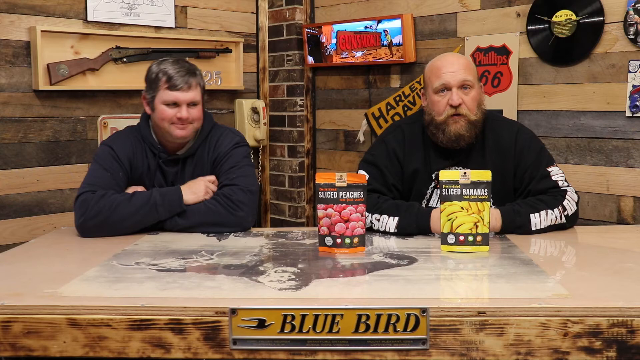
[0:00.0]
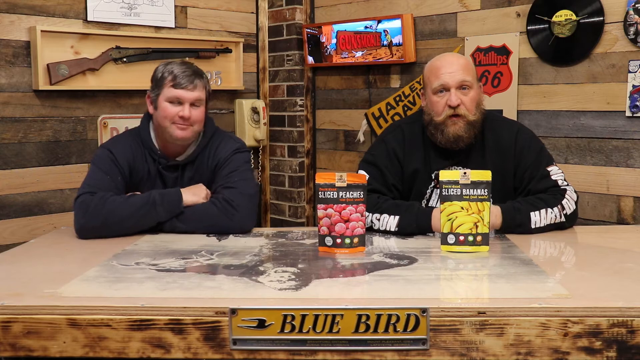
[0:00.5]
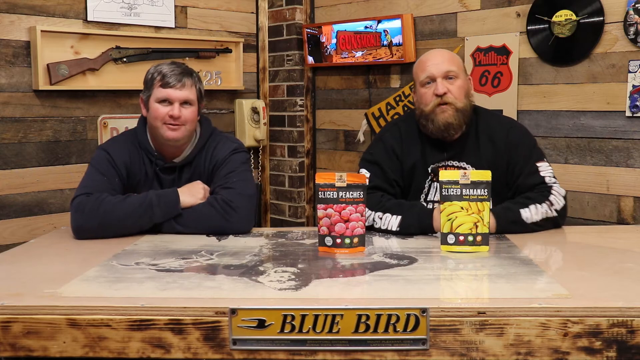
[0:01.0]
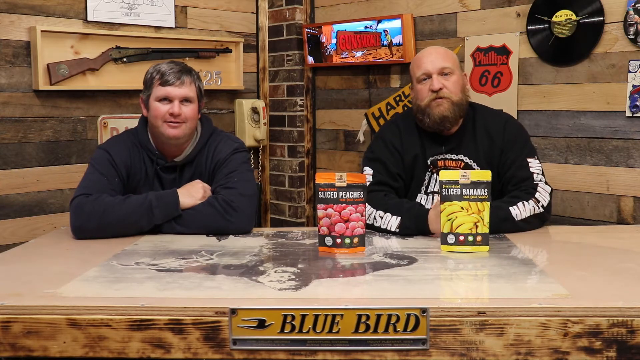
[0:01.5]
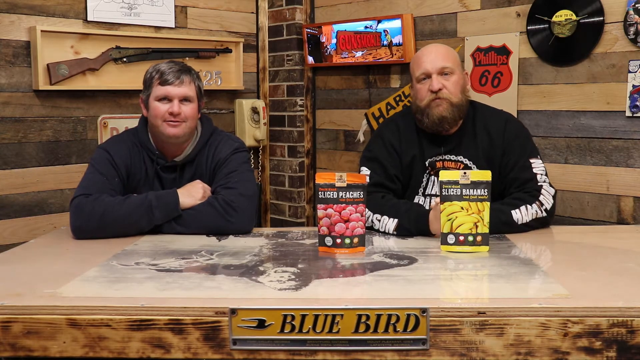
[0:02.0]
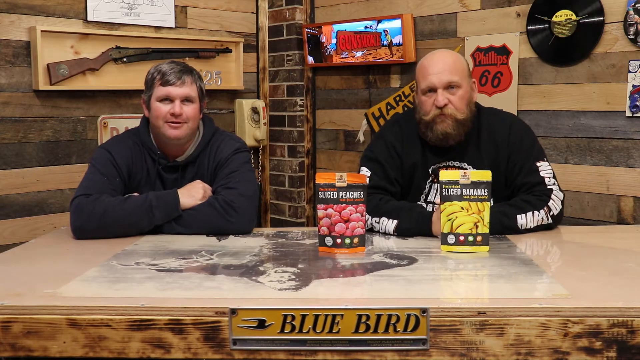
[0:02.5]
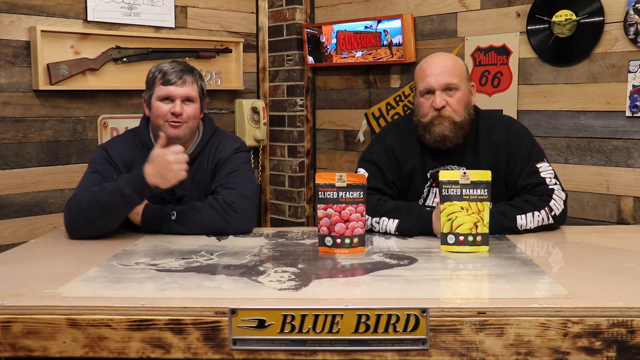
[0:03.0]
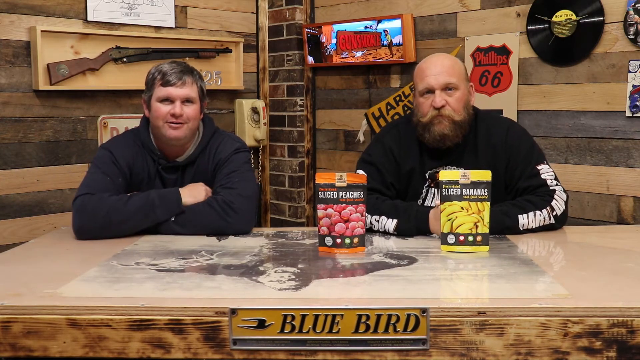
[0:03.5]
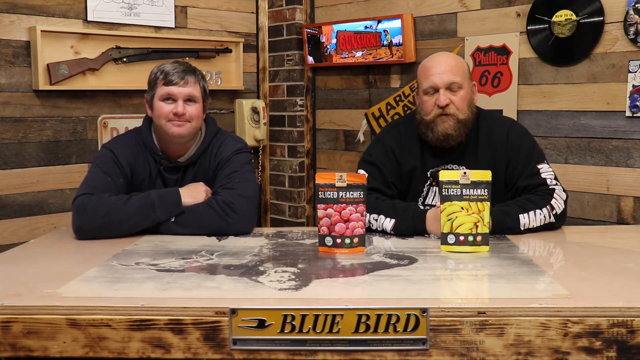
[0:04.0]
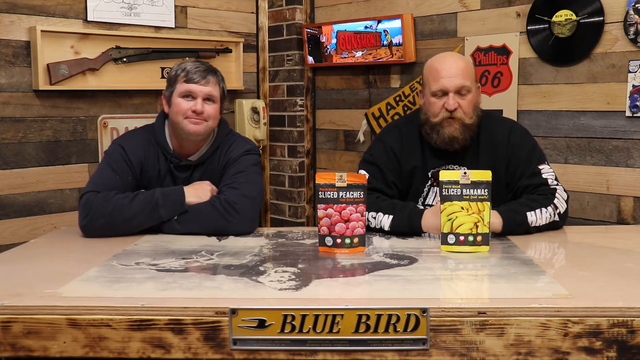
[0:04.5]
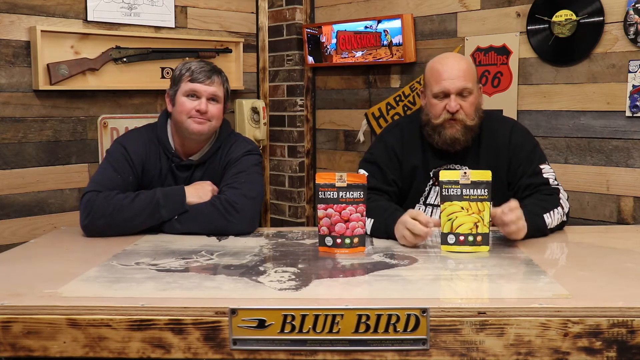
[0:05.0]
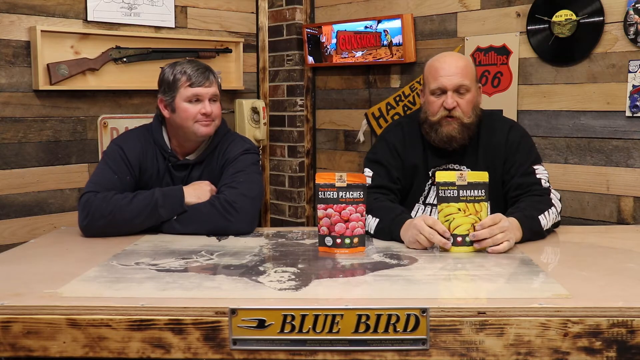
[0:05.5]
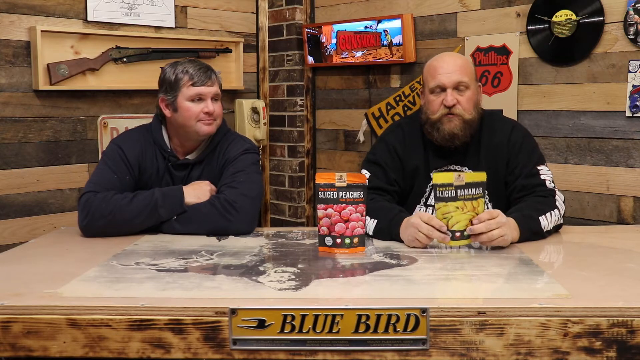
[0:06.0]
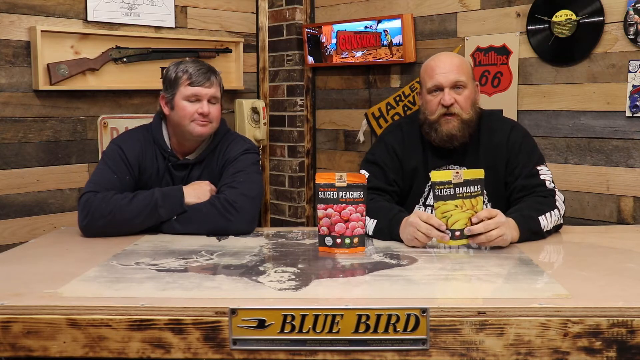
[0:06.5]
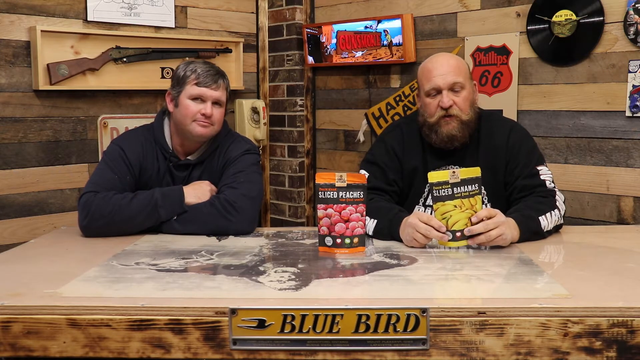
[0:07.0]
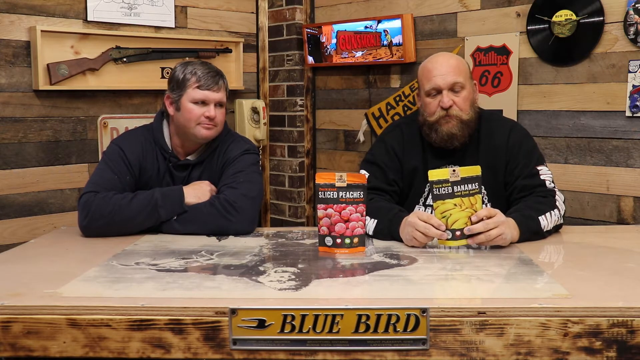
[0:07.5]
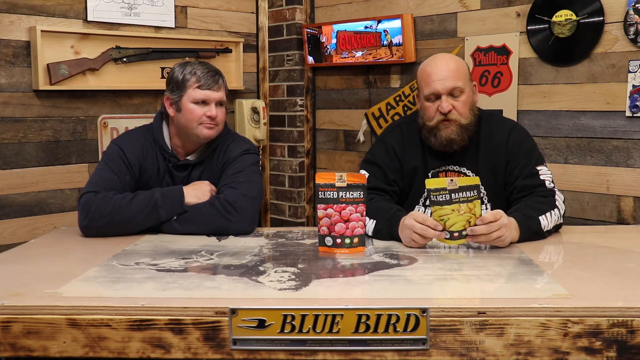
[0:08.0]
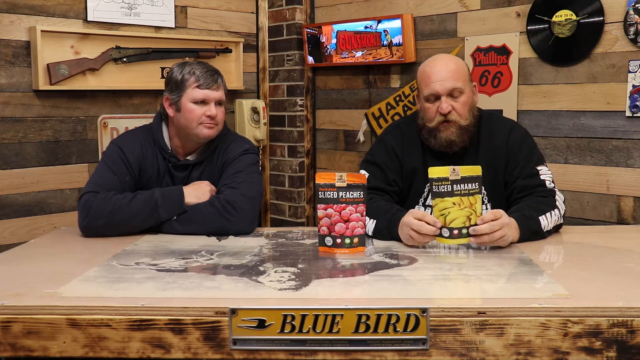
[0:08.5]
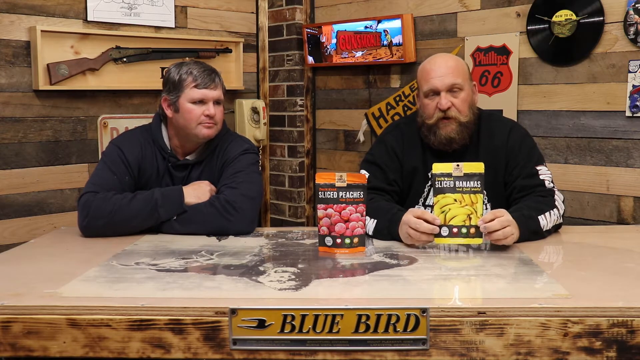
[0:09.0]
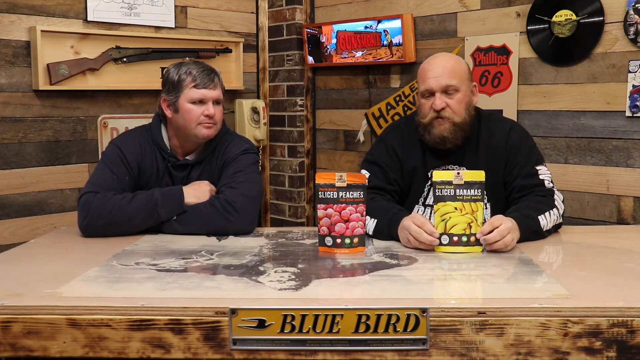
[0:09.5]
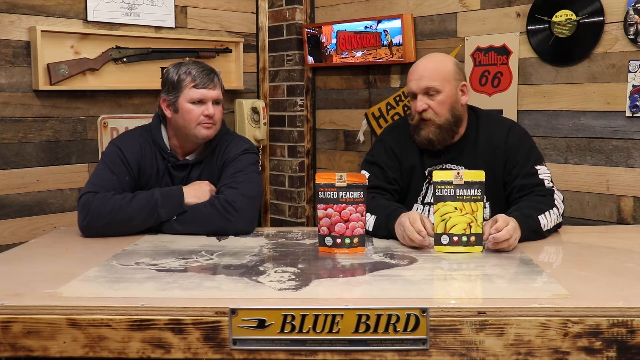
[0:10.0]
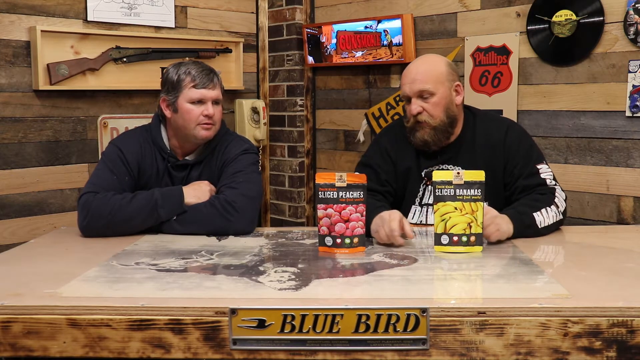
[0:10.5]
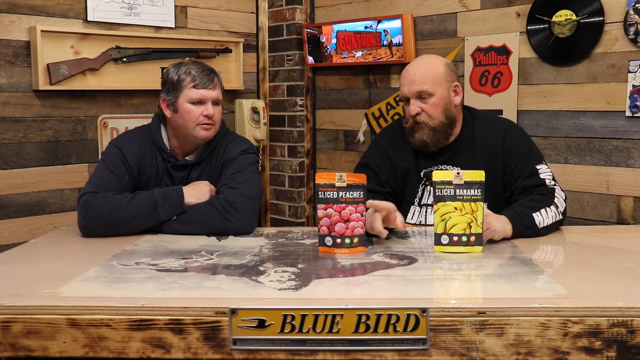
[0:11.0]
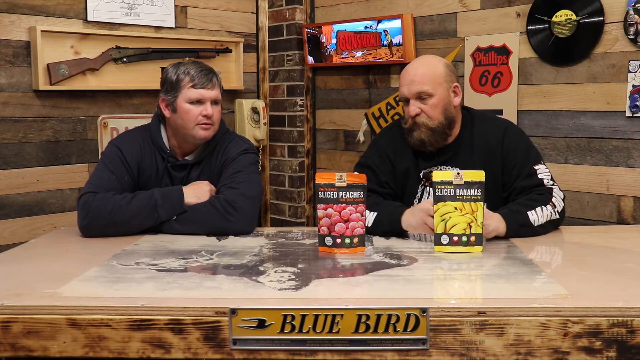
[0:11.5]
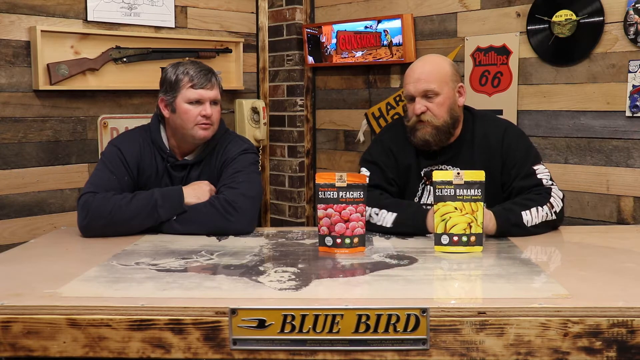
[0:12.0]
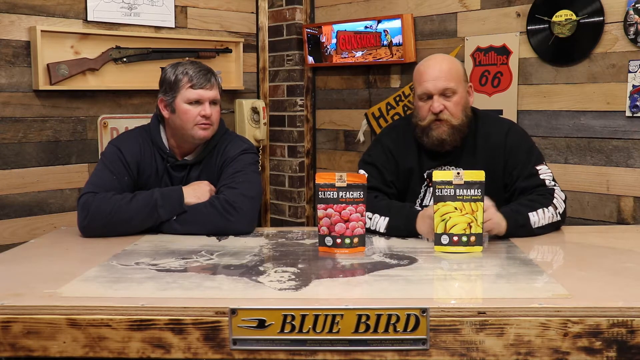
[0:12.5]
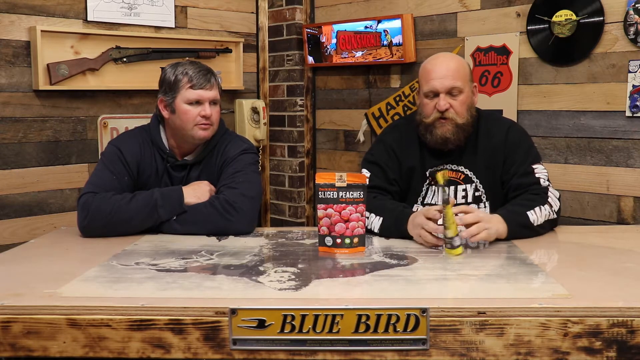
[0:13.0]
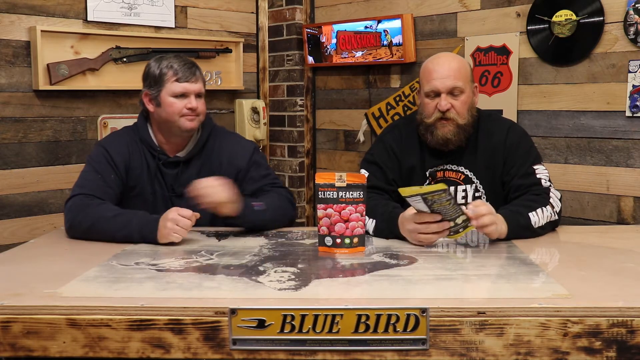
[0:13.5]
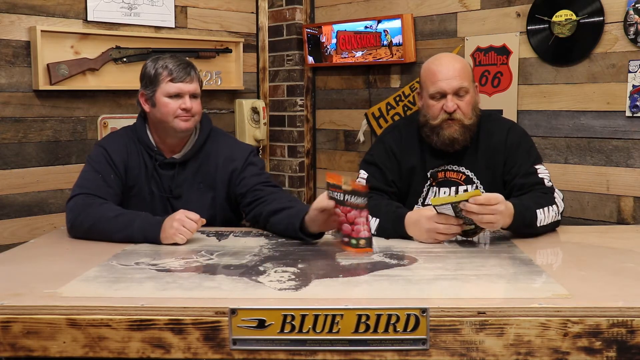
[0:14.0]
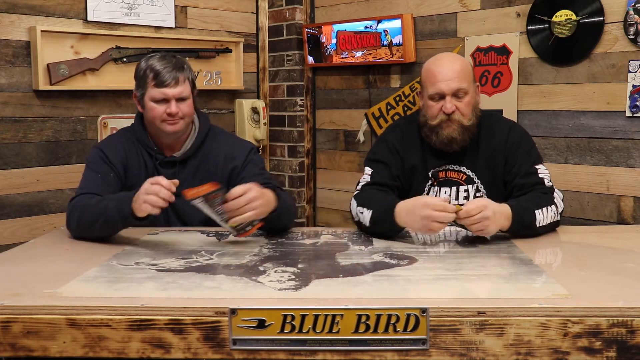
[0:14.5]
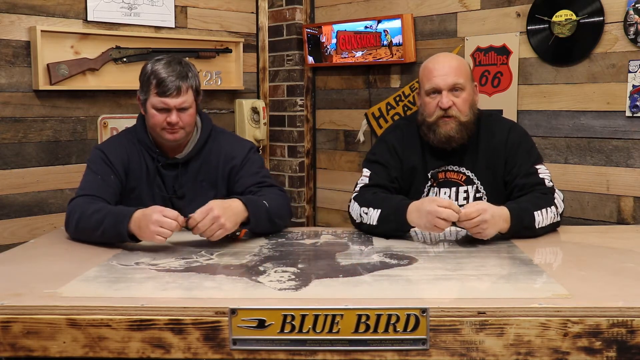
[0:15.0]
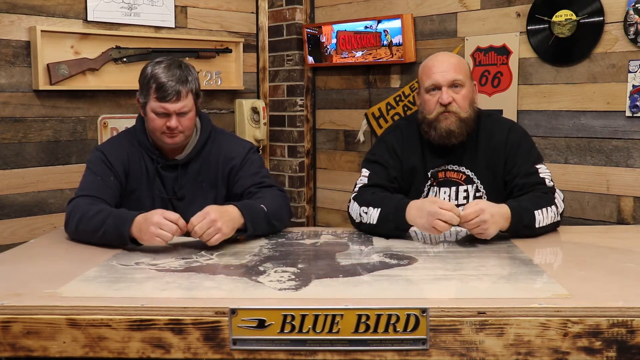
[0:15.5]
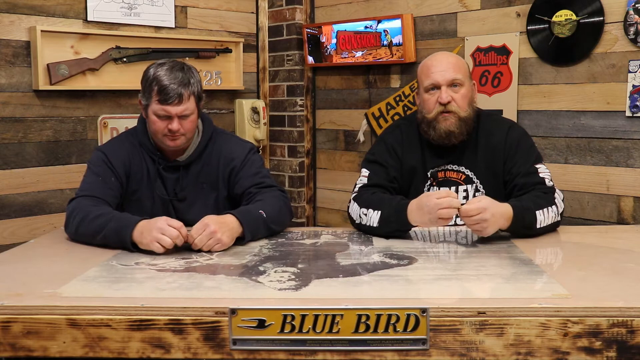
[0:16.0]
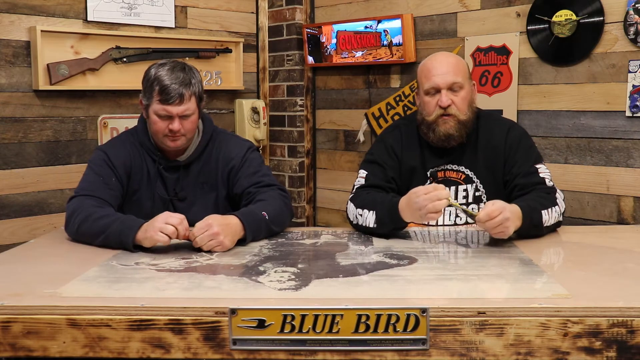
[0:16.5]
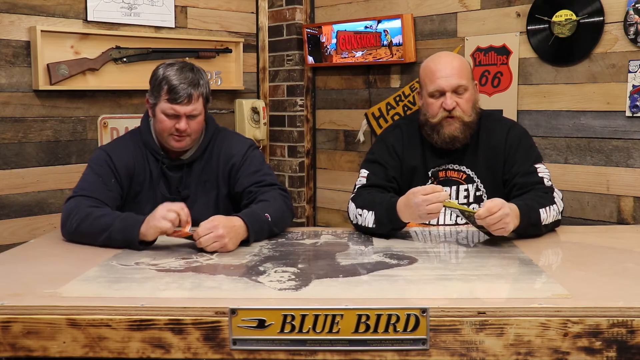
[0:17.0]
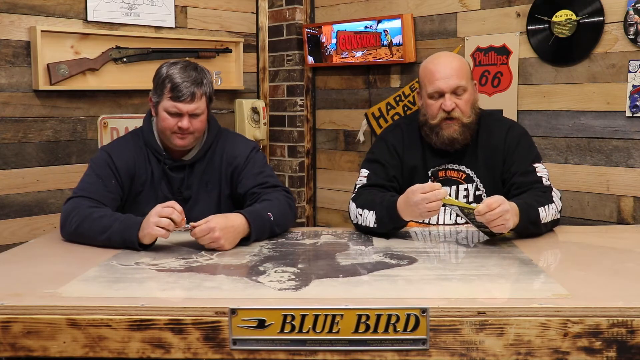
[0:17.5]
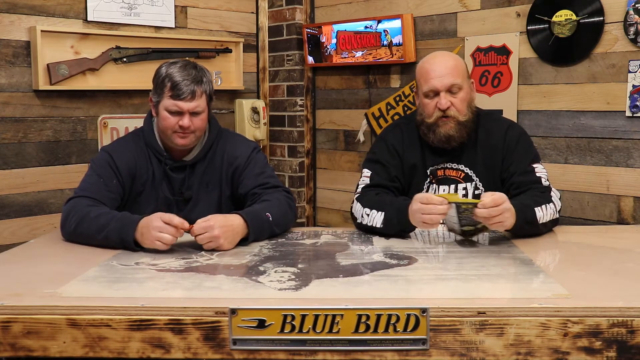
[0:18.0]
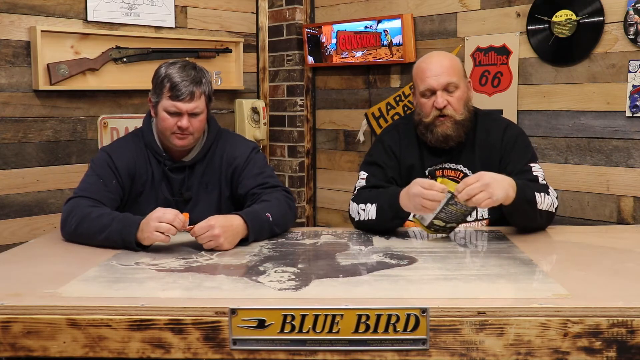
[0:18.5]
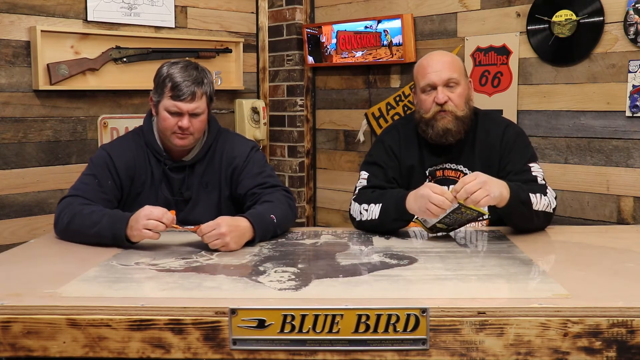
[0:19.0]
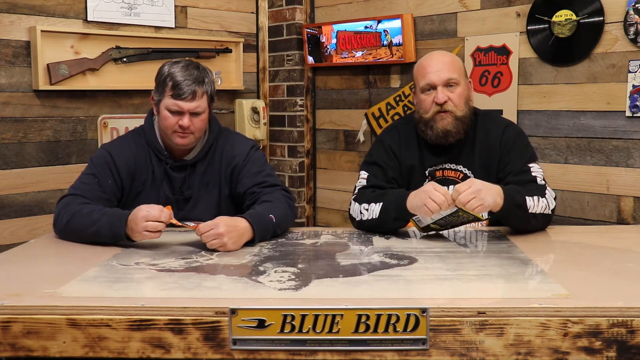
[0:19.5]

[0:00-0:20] Two men sit at a table with what seem to be two posters or pamphlets in front of them. Behind them, a rifle is hung on the wall, and some LPs are hung on the wall as well. The two men seem to be white, and both wear black tops. They seem to be talking to the camera, and a sticker on the front of their table says "Bluebird". As they keep talking, one of them holds his poster in his hand. He appears to tell the other man to grab his poster as well: he talks to him and points at the poster, and the other man grabs his poster too. They seem to be tearing the posters apart.